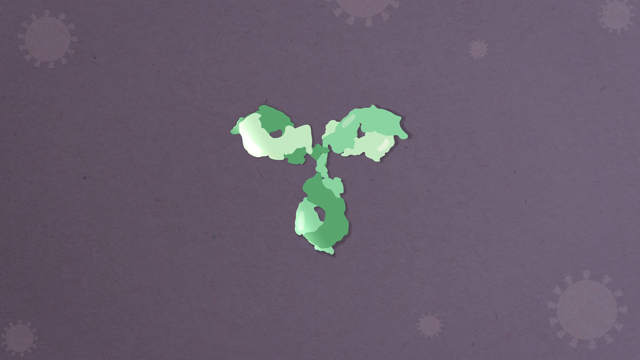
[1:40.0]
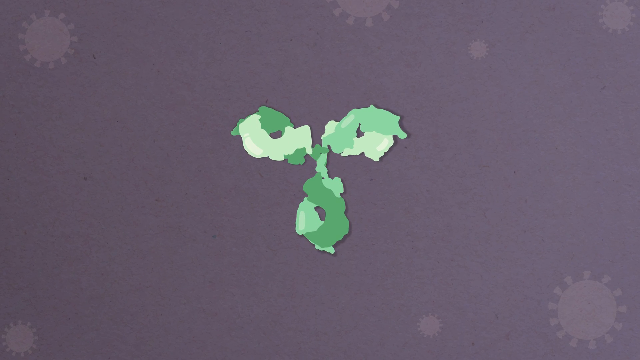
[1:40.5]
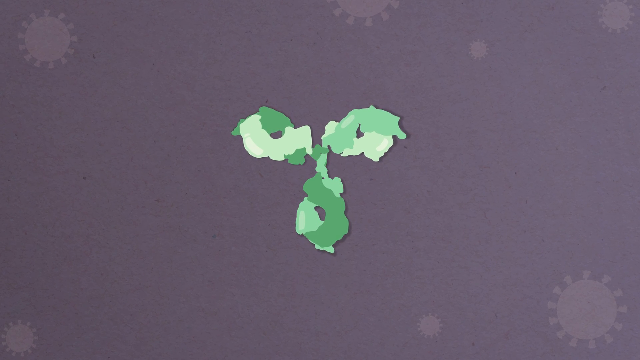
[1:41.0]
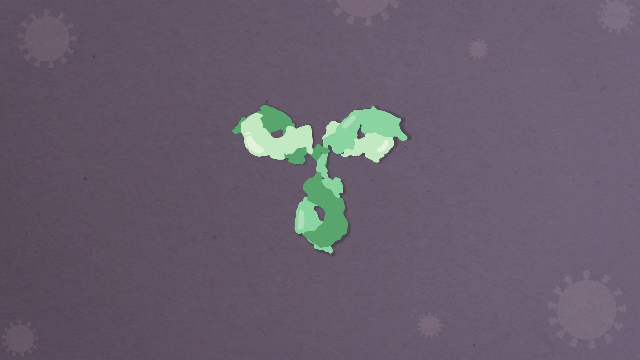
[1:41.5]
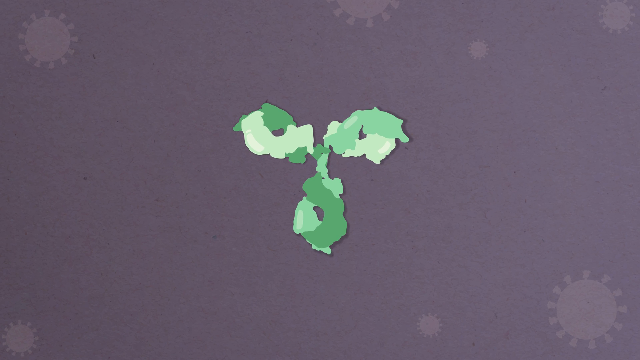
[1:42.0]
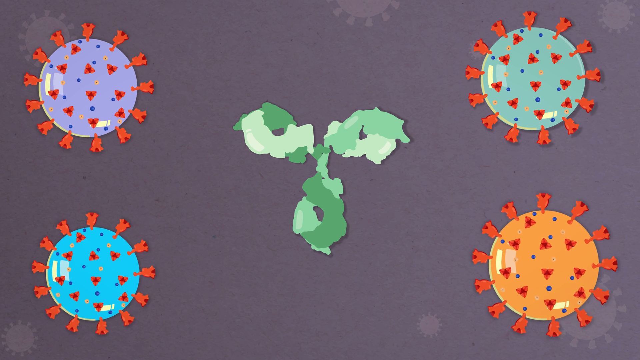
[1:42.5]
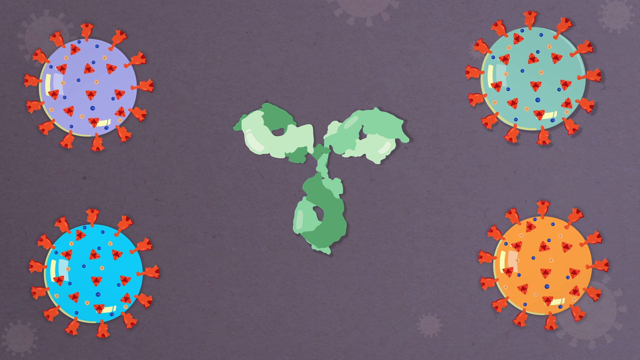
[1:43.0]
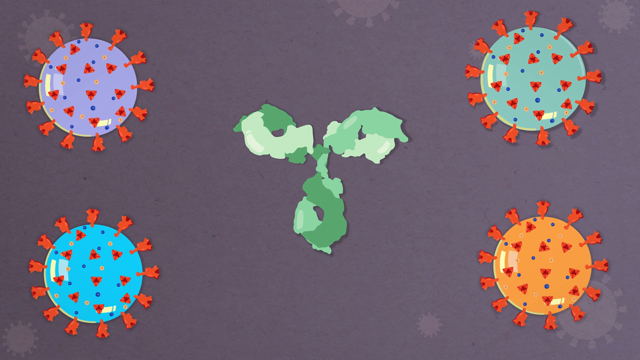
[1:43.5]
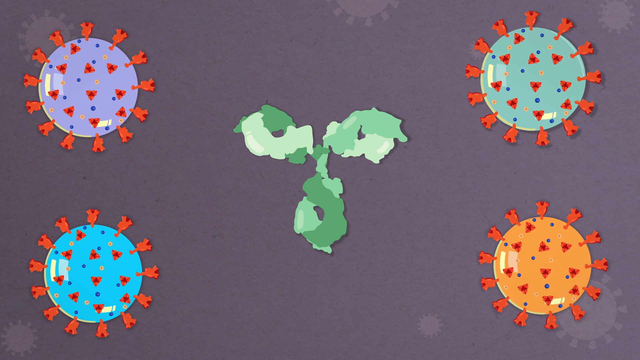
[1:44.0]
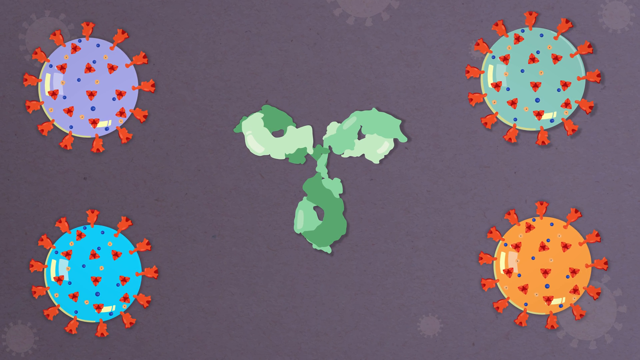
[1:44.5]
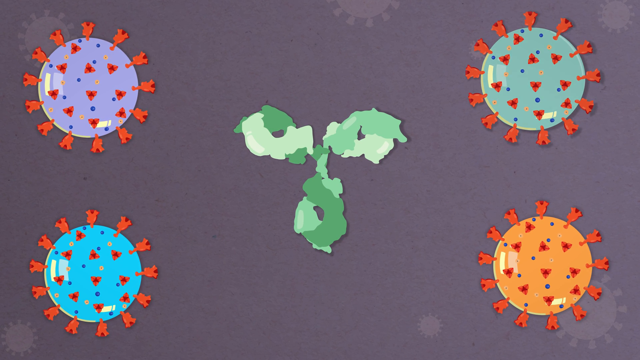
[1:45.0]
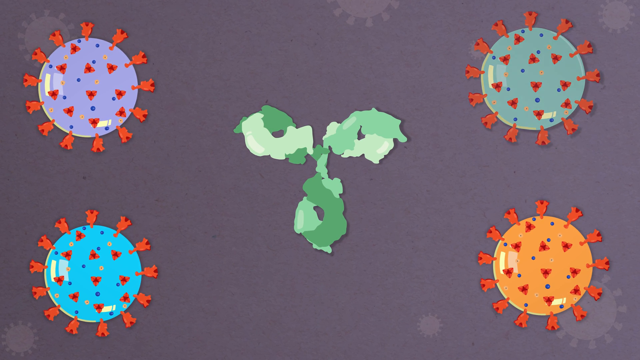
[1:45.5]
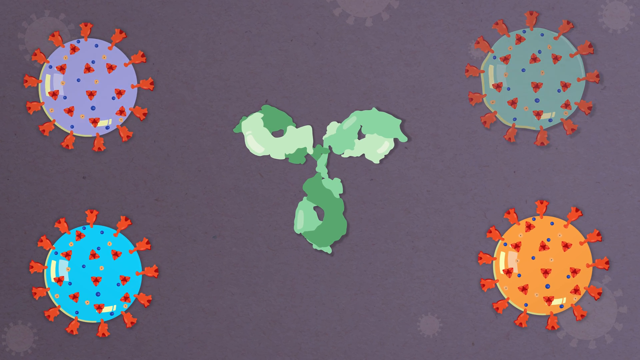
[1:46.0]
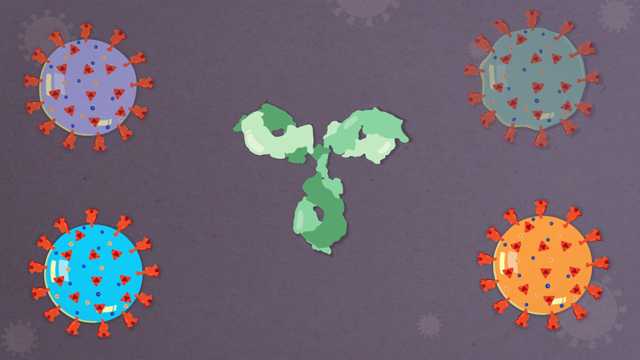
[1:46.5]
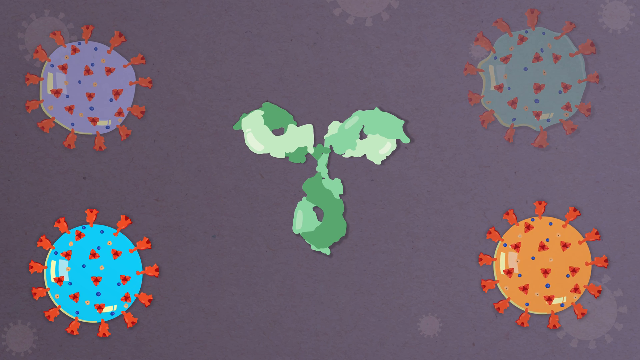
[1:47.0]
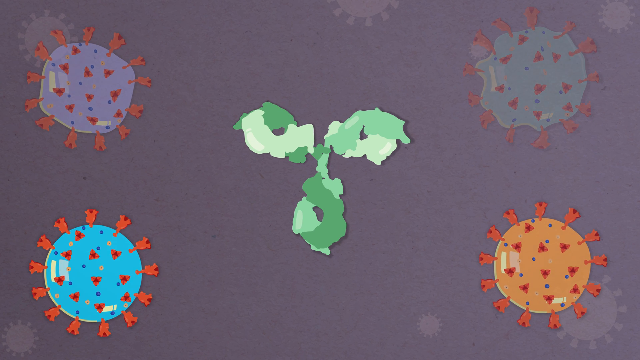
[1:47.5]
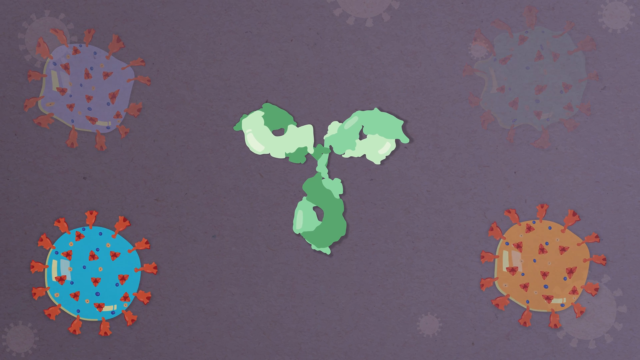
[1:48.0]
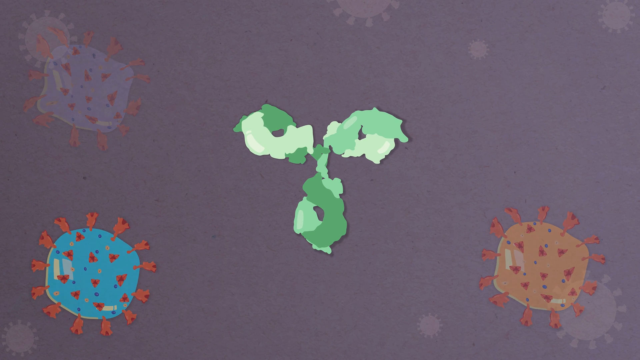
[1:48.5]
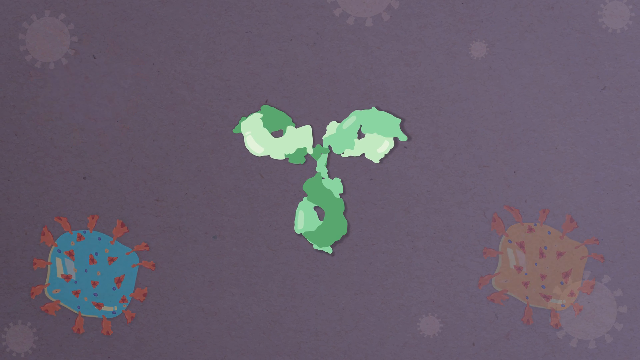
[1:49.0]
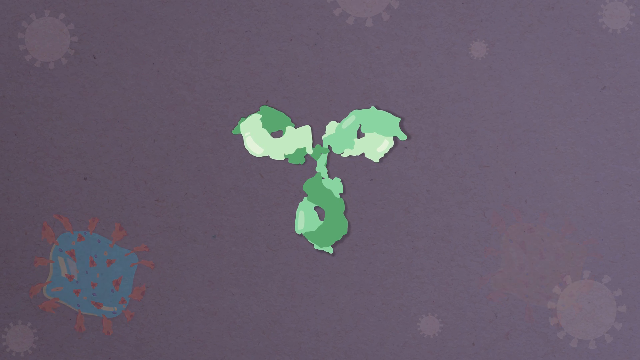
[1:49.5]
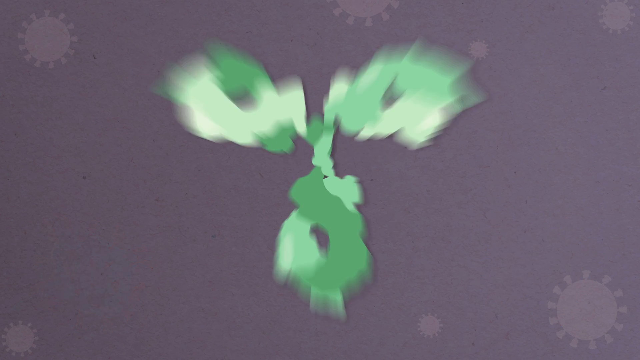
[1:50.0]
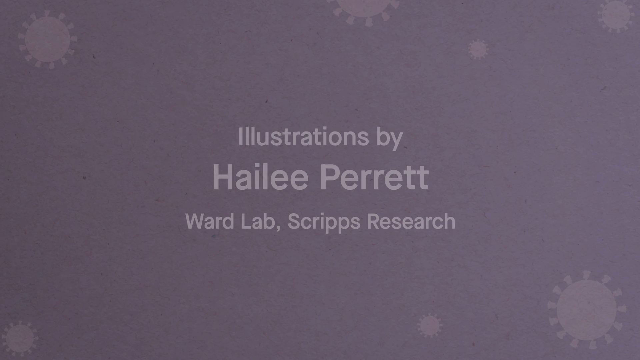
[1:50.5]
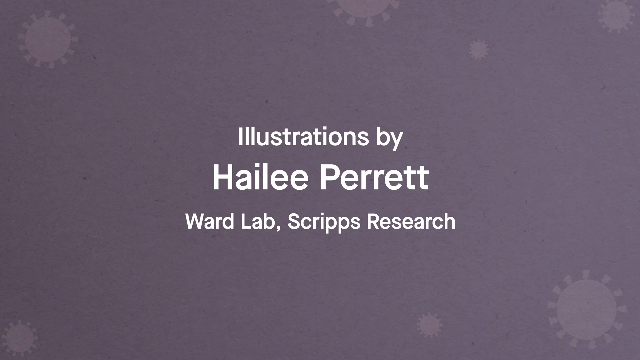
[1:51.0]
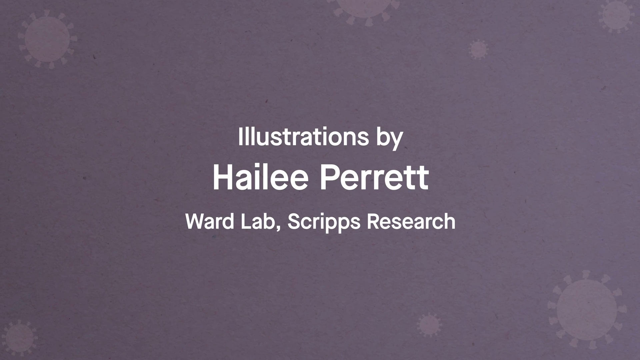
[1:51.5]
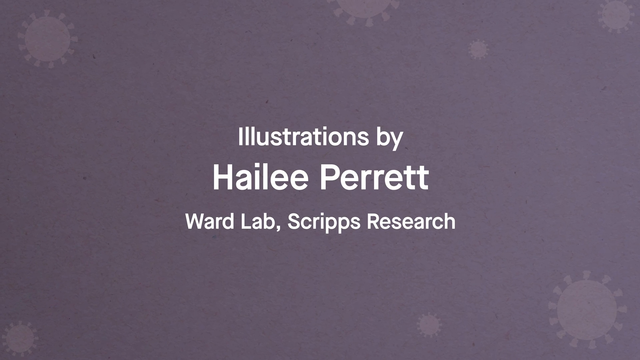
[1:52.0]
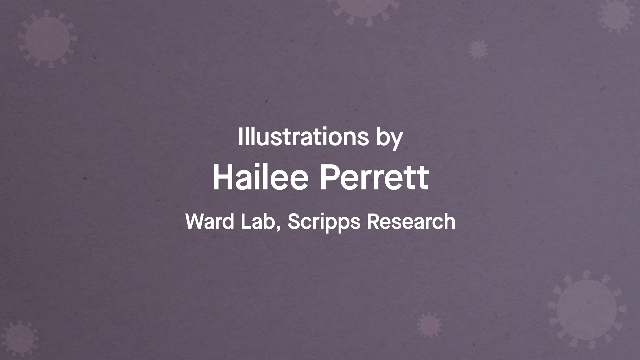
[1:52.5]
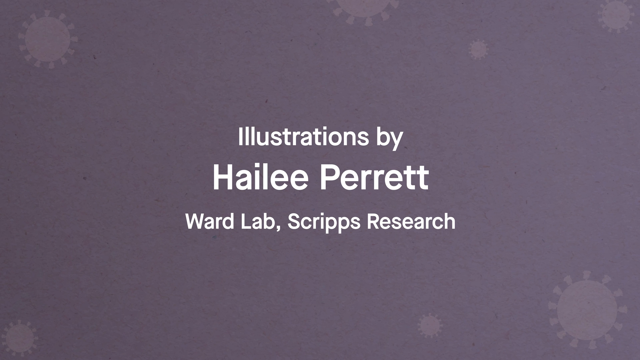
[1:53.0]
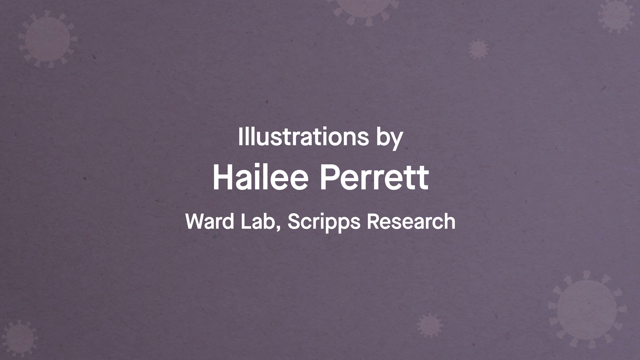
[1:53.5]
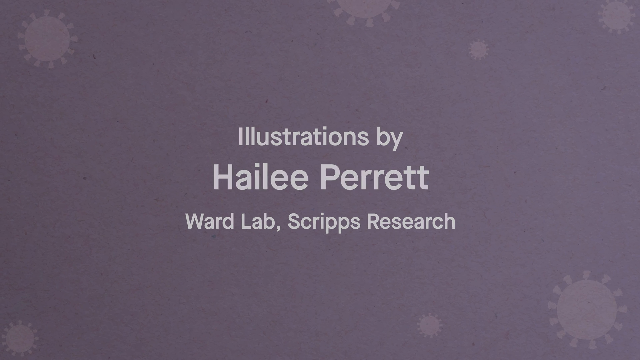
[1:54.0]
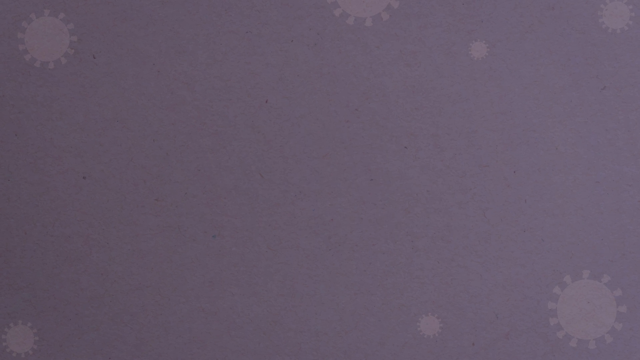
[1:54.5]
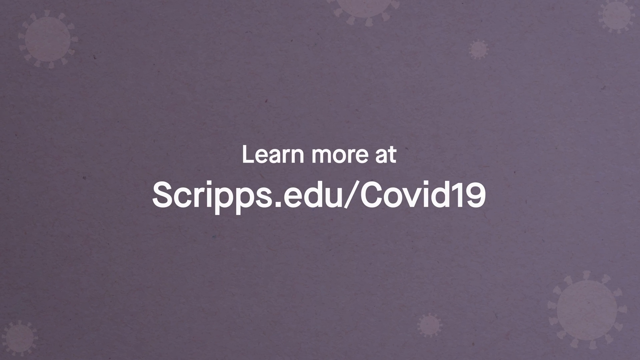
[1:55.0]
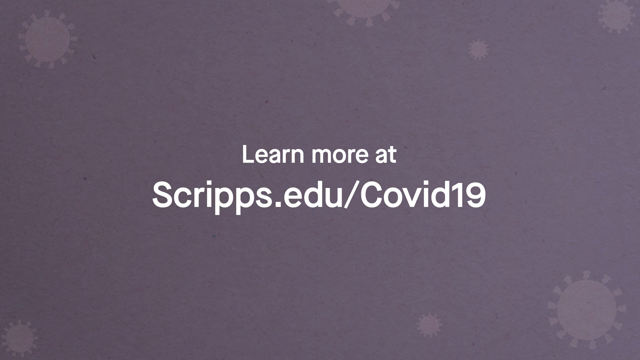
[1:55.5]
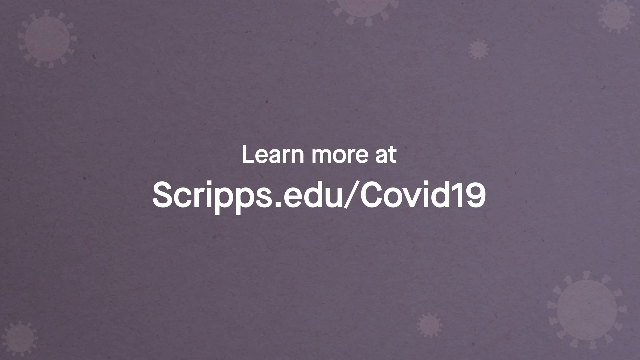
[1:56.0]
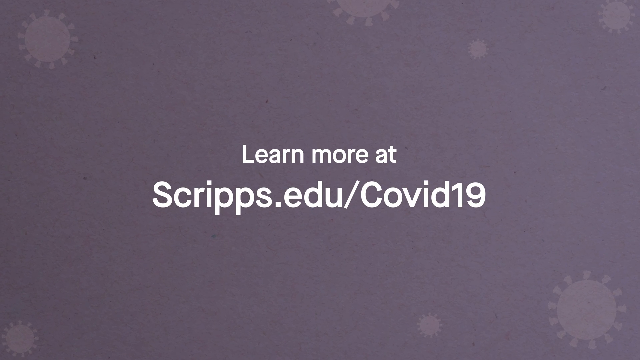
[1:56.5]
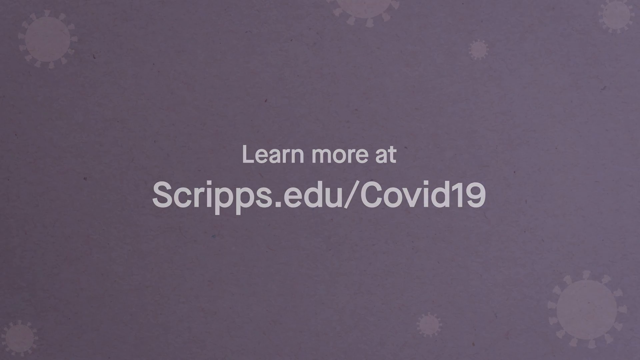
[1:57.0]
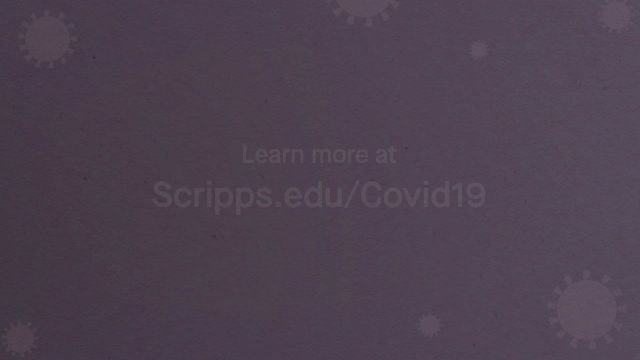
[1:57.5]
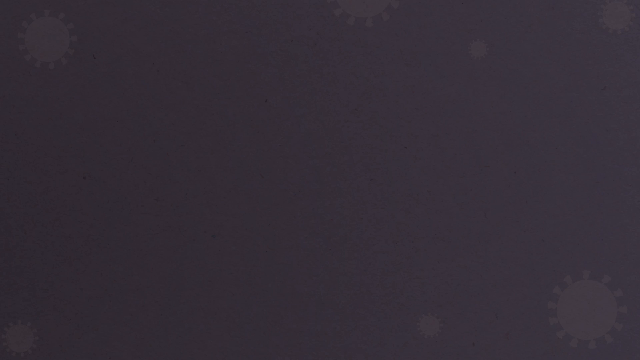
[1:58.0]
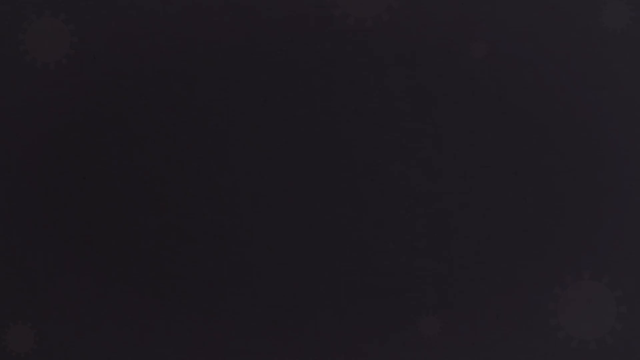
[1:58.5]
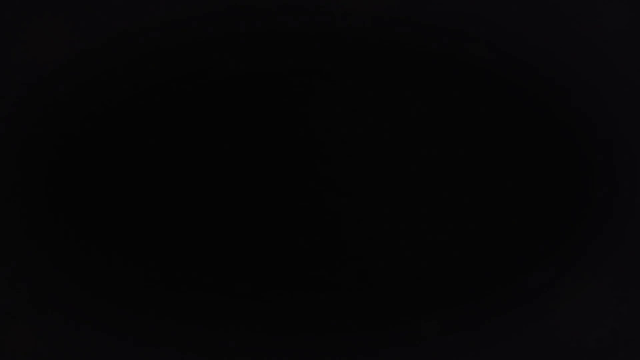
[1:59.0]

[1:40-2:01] A single light green and dark green antibody is in the center of the screen against a dark charcoal gray background, with lighter gray faded cells at the top of the screen. Four different cells surround the antibody, two on the left side and two on the right. Toward the top on the left is a purple cell that also has reddish-orange, blue and yellow parts. Beneath it is a blue cell with red, blue, yellow and orange parts. At the top right is a green cell with the same colors of blue, yellow, red and orange. Beneath the green cell is an orange cell with blue, orange and yellowish parts.